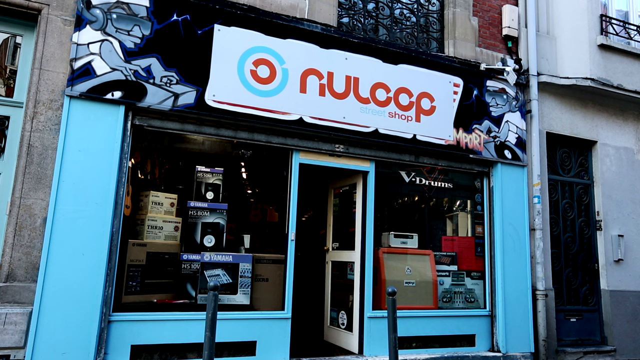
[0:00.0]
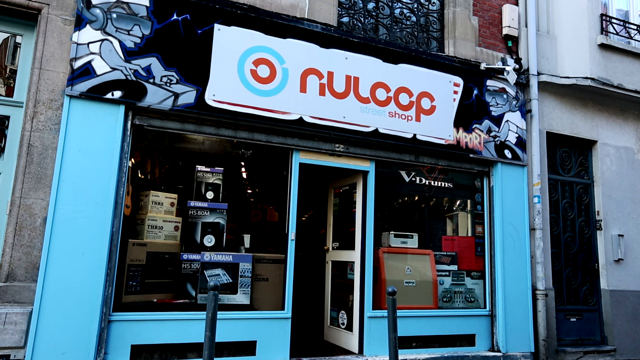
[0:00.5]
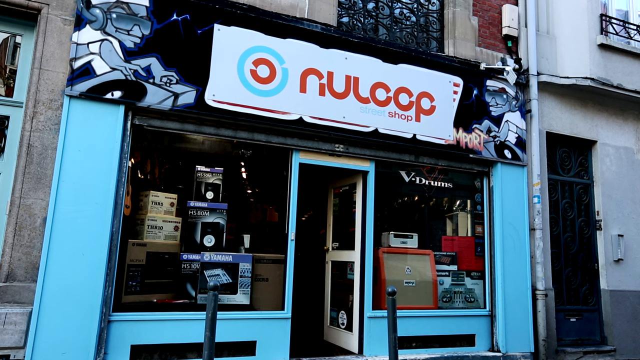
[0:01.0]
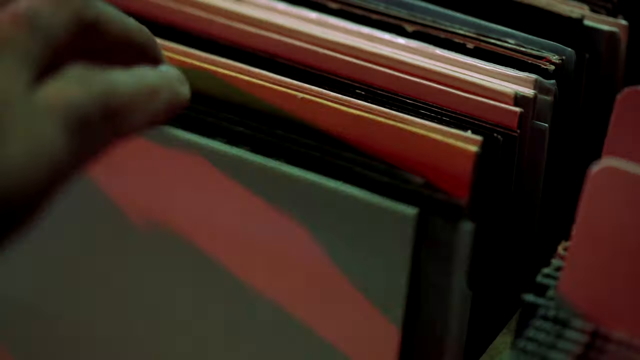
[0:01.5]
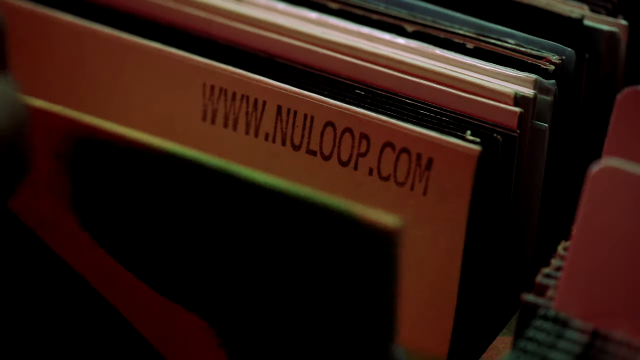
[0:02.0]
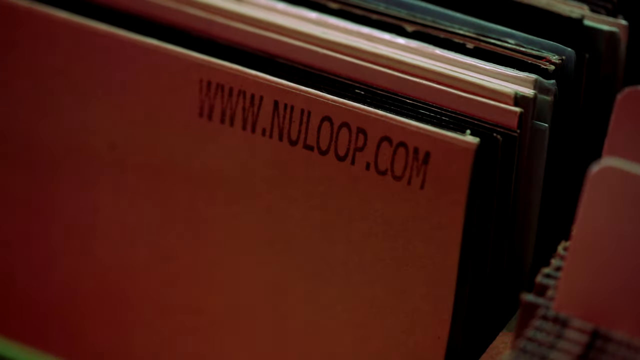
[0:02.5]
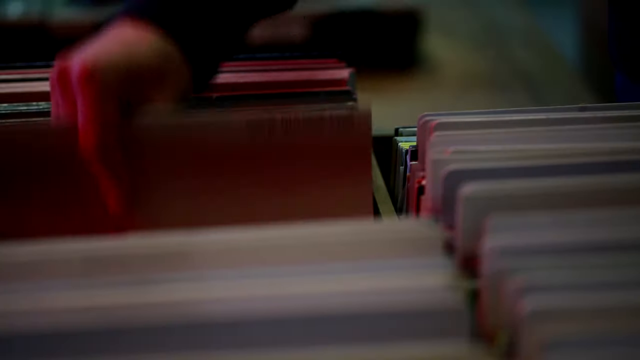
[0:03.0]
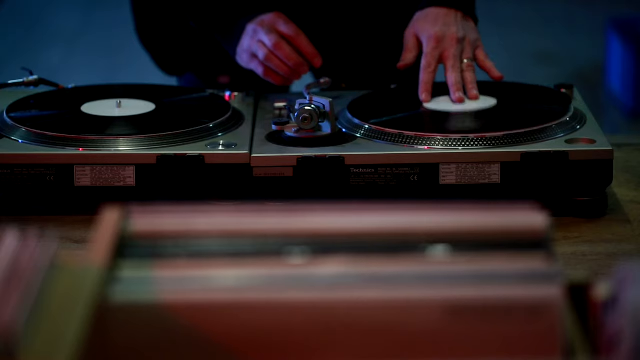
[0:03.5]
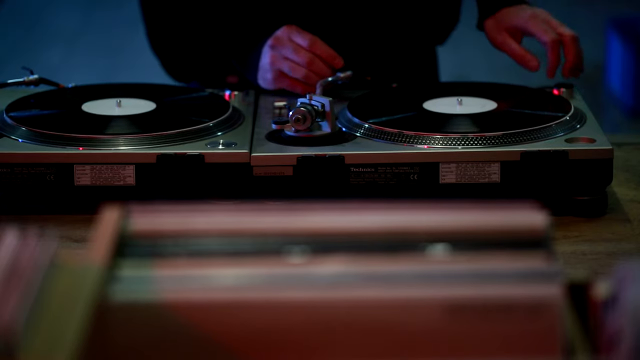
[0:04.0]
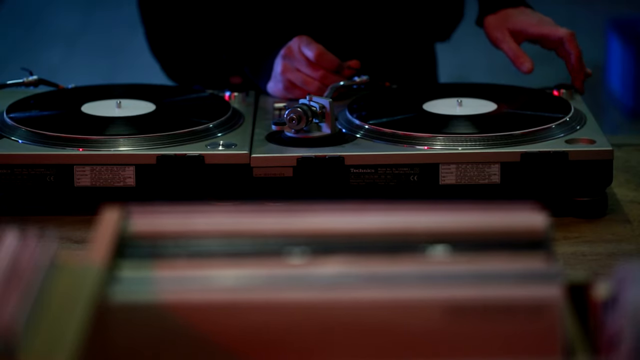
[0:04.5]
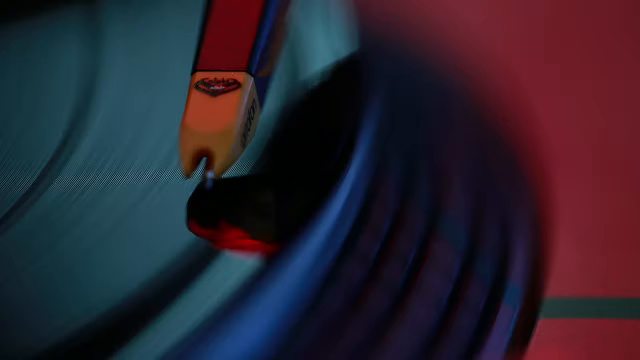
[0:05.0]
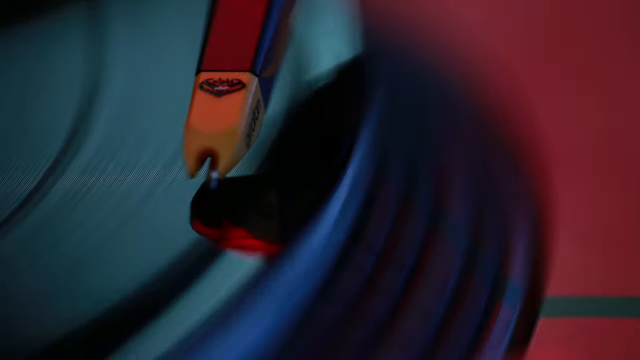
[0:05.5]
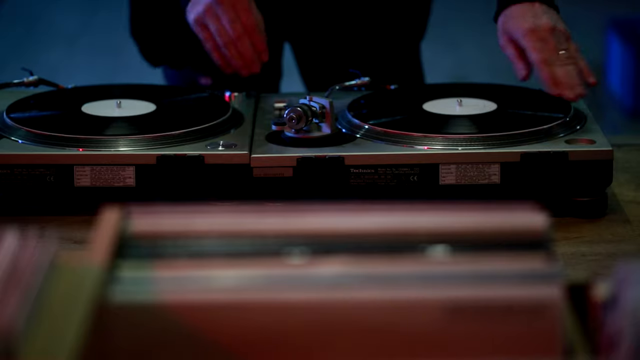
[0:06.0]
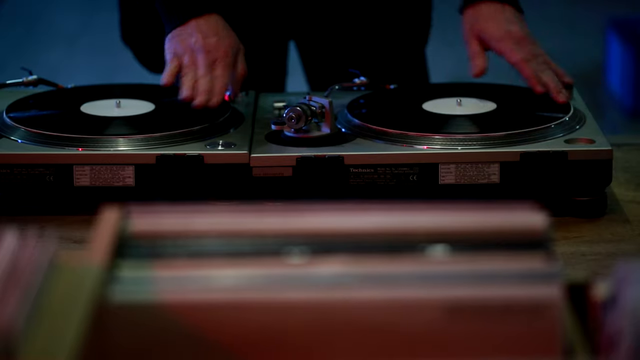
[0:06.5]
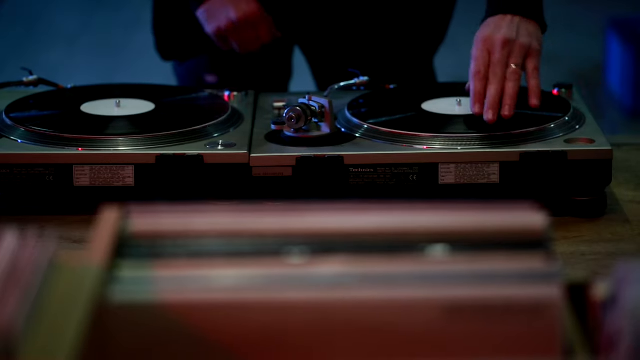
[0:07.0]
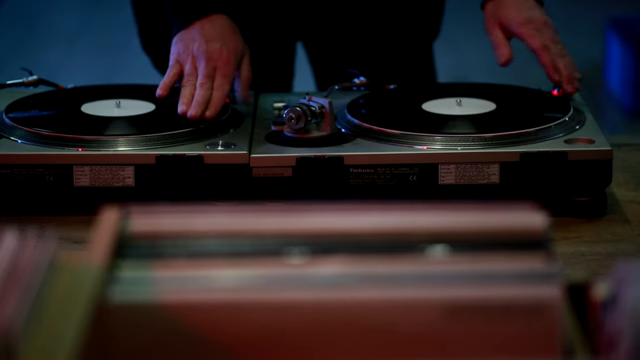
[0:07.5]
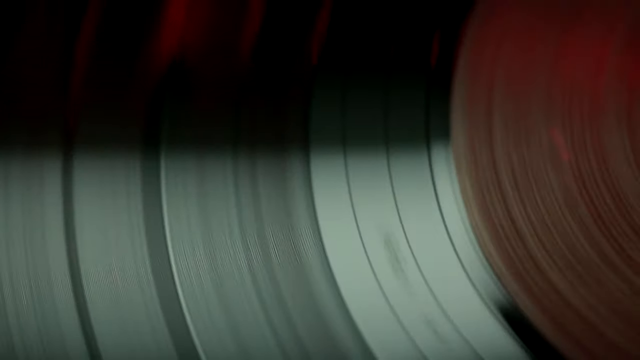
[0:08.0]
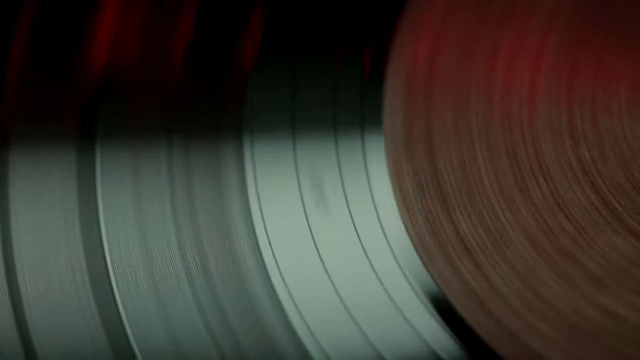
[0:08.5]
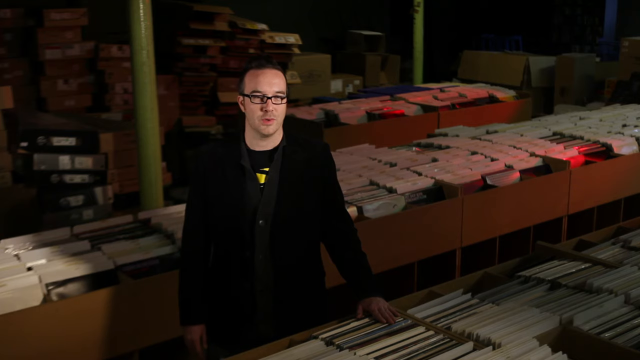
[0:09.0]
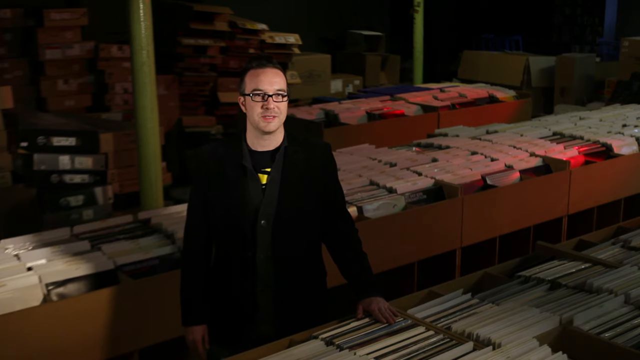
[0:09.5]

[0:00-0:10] The video opens on a shop called NuLoop Shop, which has a lot of blue borders and advertisements. Inside, "www.inuloop.com" is shown. It is an old album record store, with albums and record players shown. Somebody does the familiar record scratching, and a man in a black jacket and glasses is shown talking. The place seems to be a kind of revitalization of old records and albums. The outside of the NuLoop building has a lot of blue border and a little bit of black.